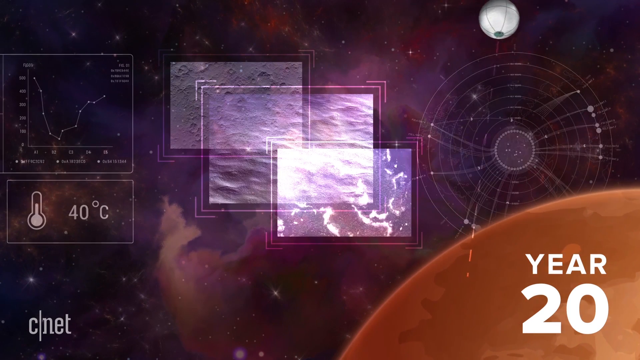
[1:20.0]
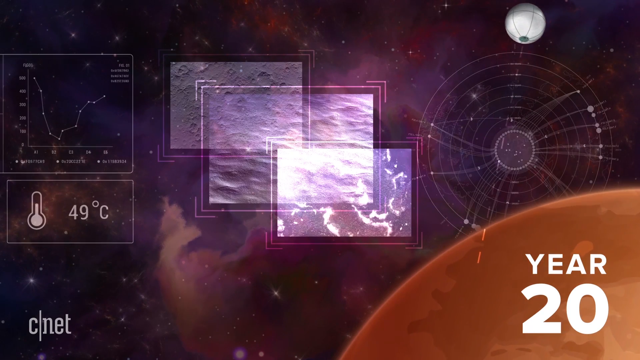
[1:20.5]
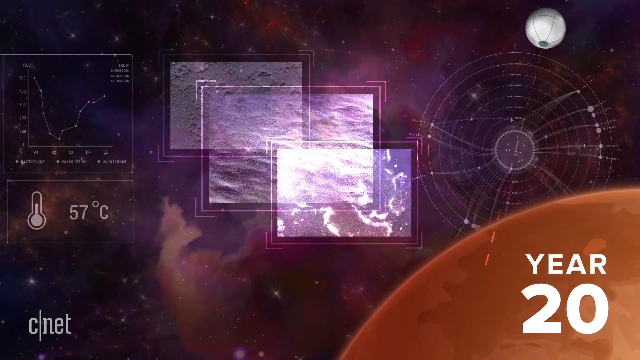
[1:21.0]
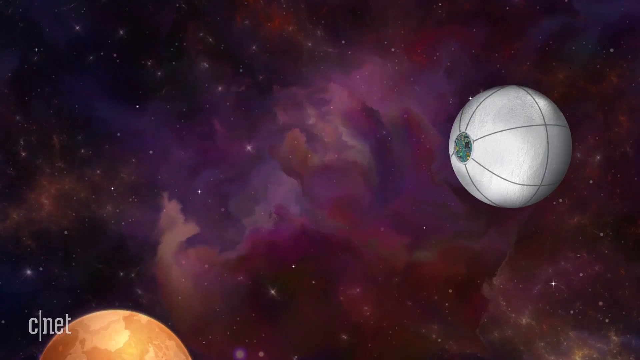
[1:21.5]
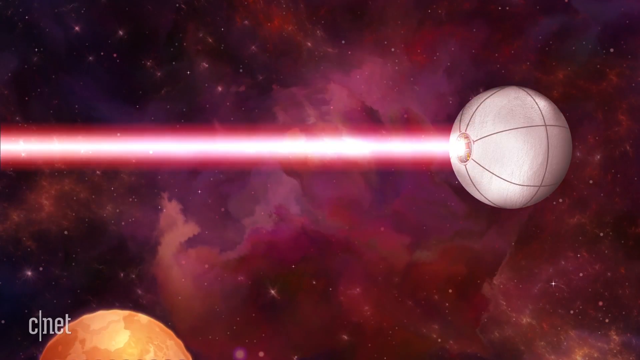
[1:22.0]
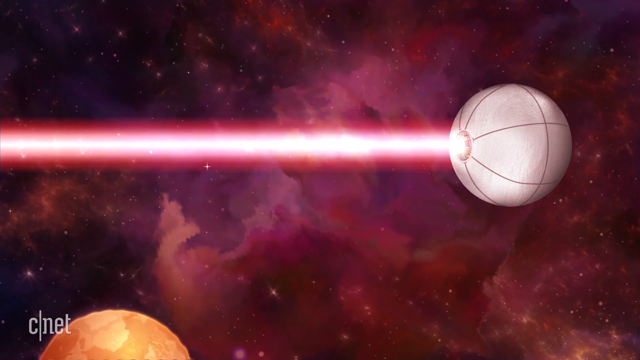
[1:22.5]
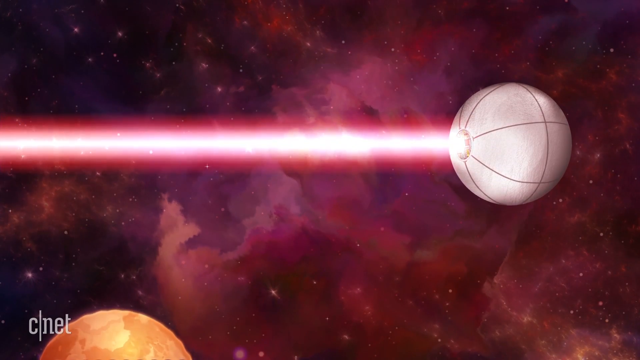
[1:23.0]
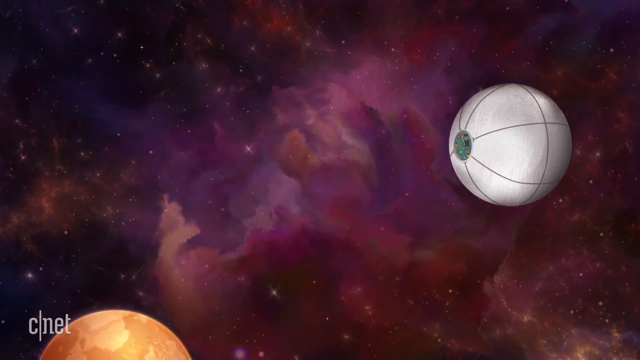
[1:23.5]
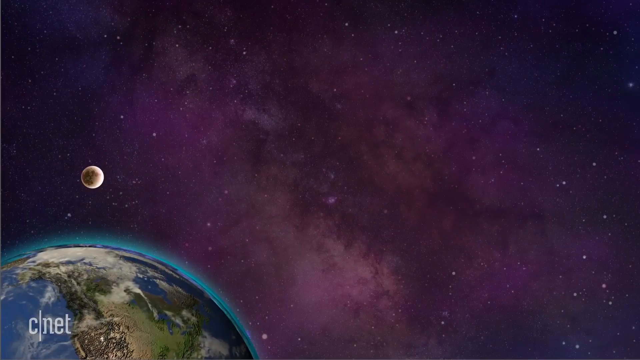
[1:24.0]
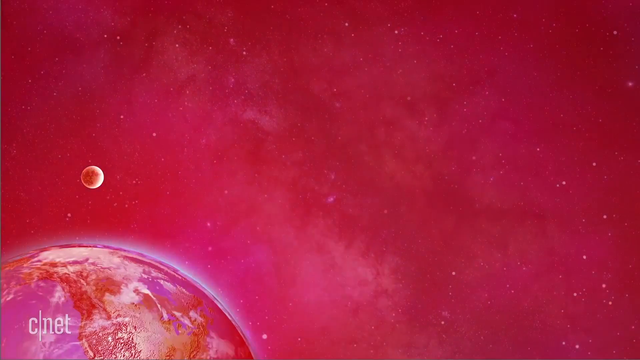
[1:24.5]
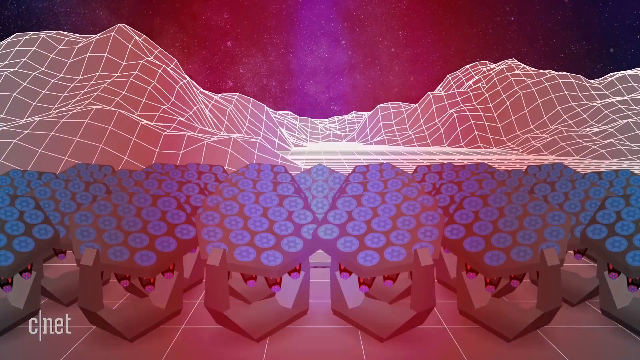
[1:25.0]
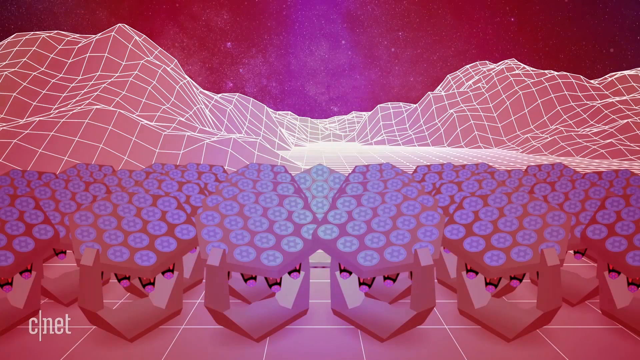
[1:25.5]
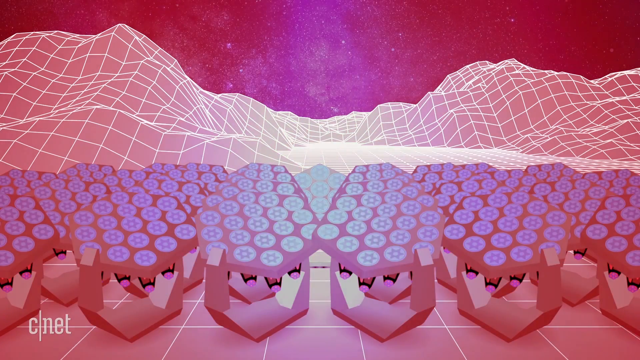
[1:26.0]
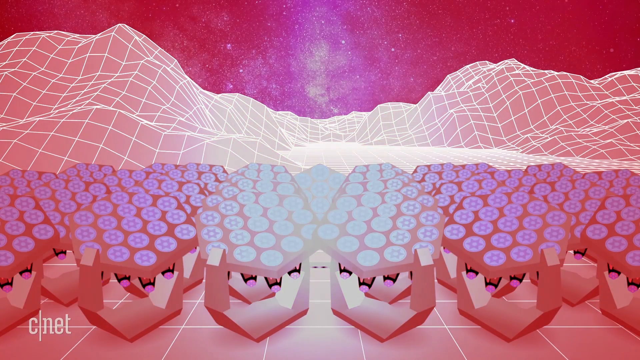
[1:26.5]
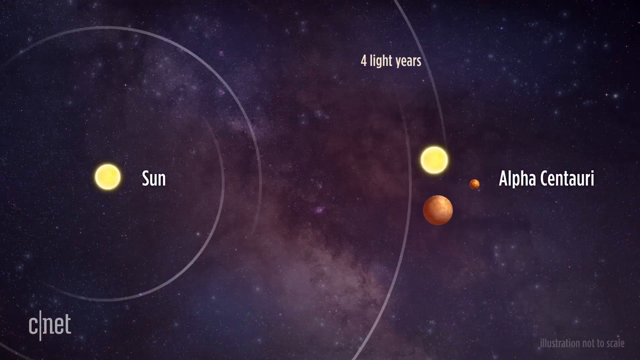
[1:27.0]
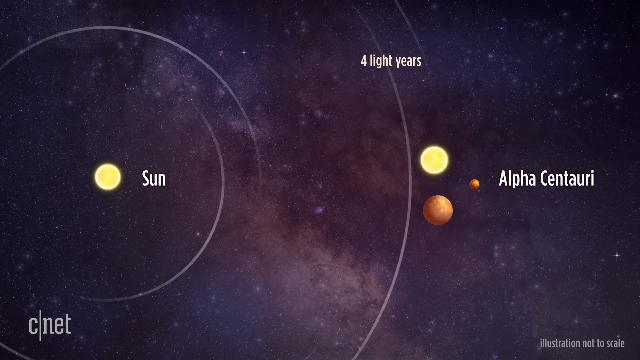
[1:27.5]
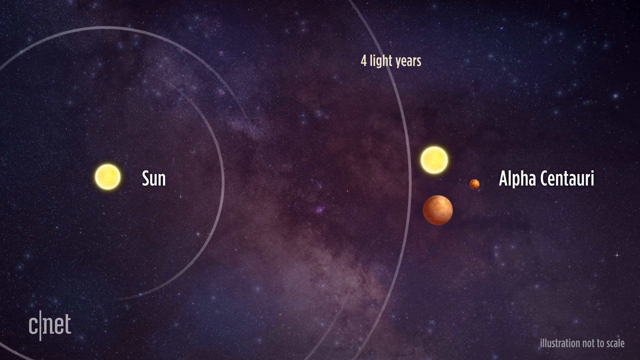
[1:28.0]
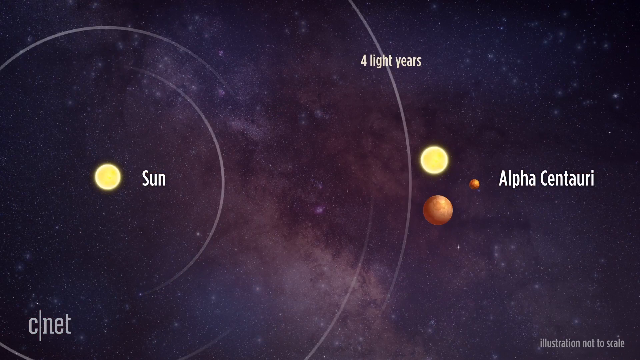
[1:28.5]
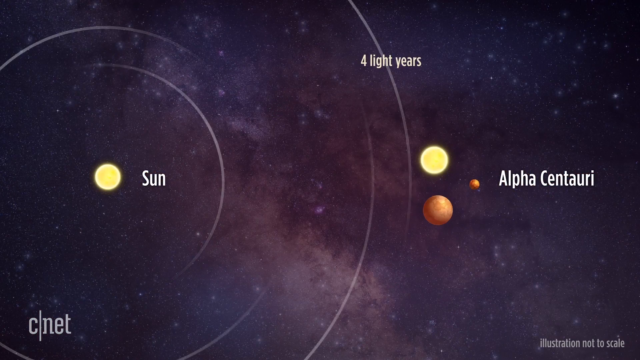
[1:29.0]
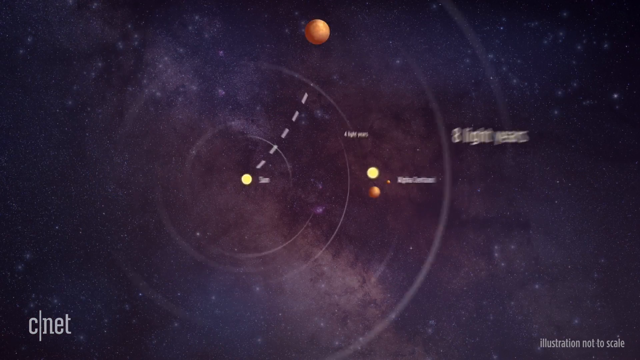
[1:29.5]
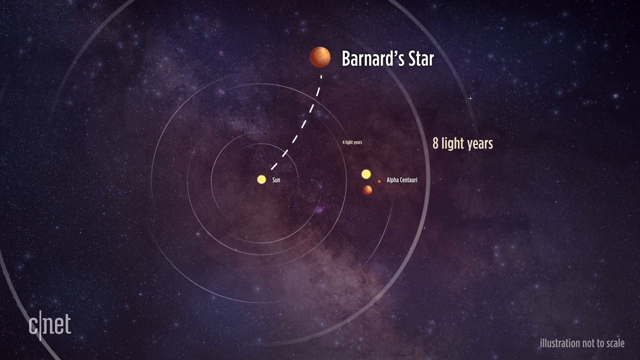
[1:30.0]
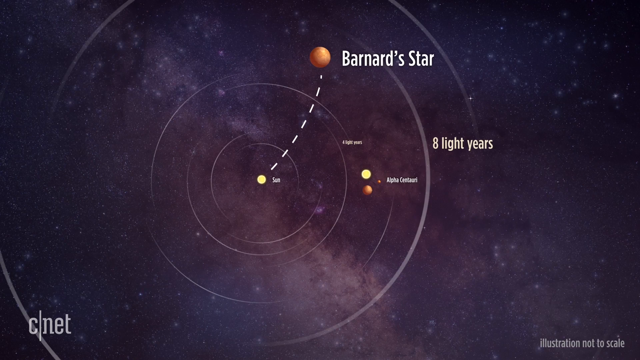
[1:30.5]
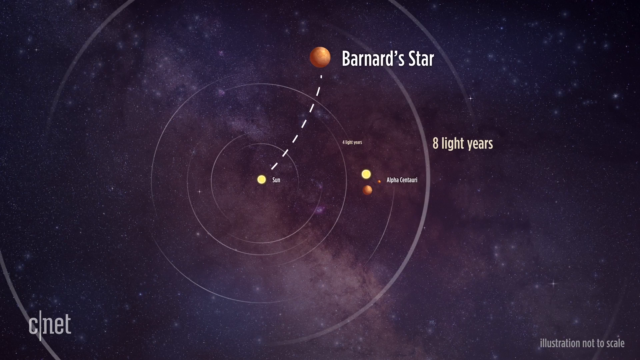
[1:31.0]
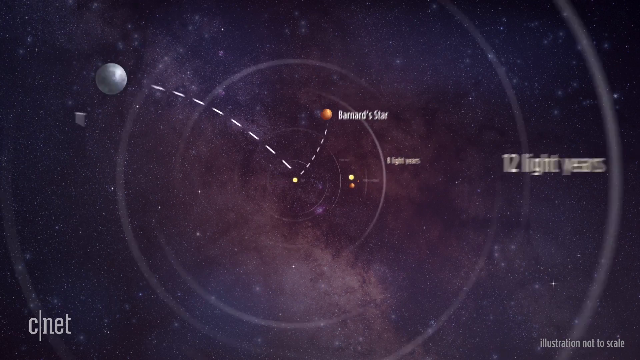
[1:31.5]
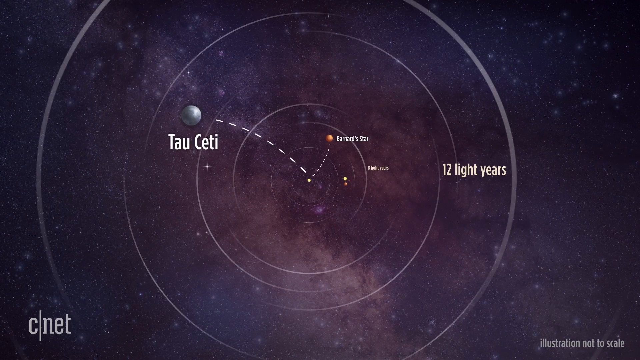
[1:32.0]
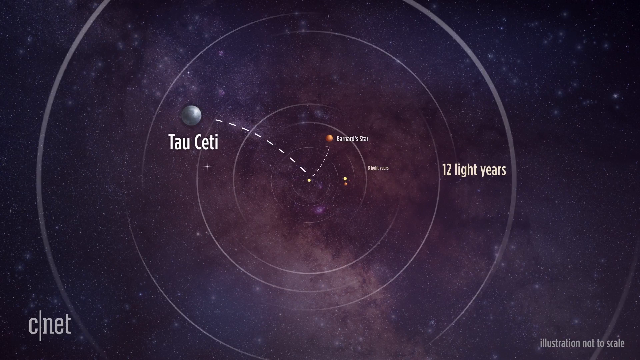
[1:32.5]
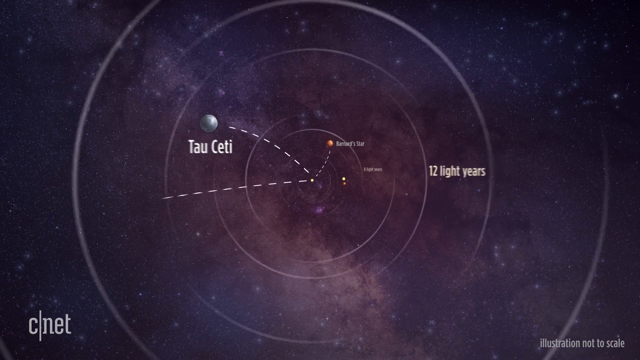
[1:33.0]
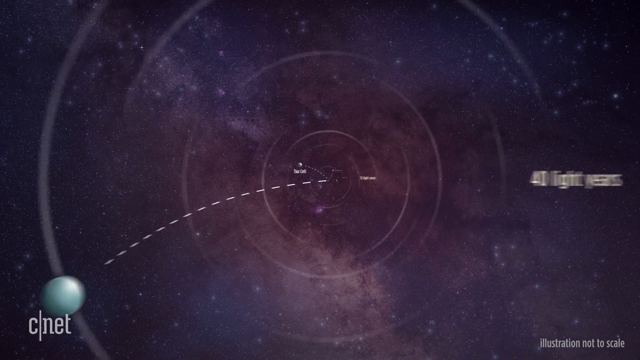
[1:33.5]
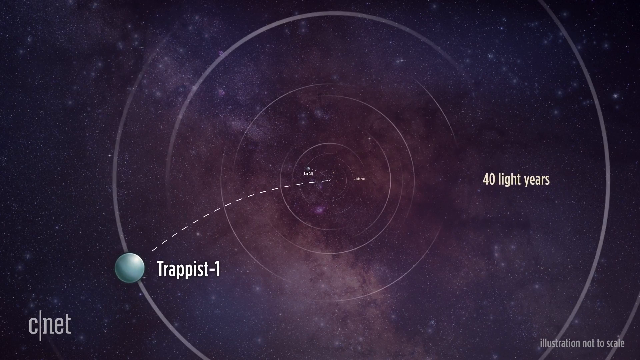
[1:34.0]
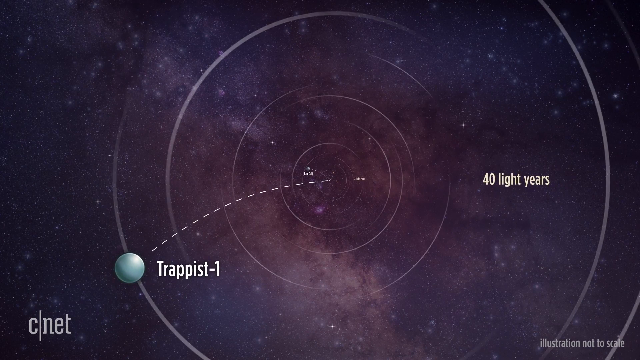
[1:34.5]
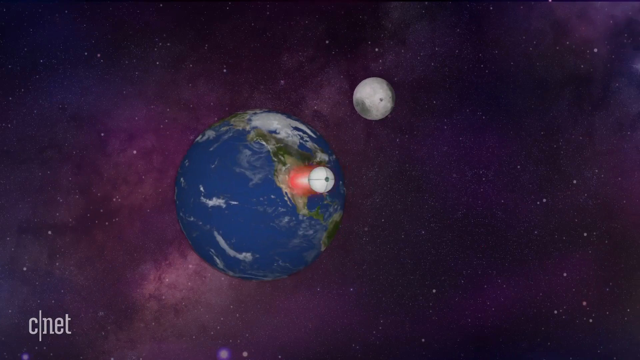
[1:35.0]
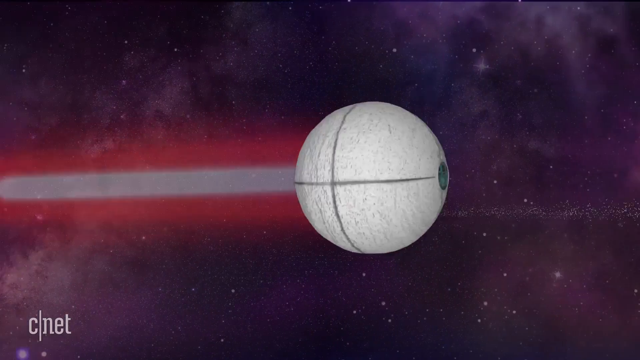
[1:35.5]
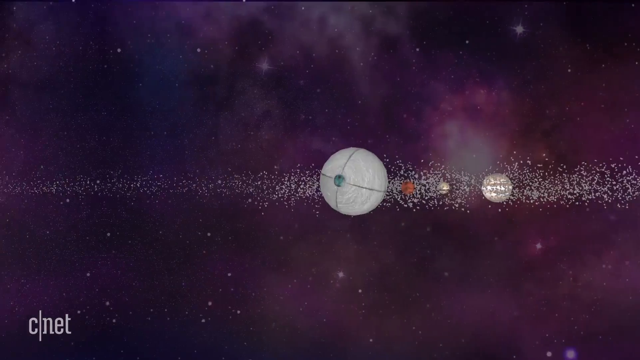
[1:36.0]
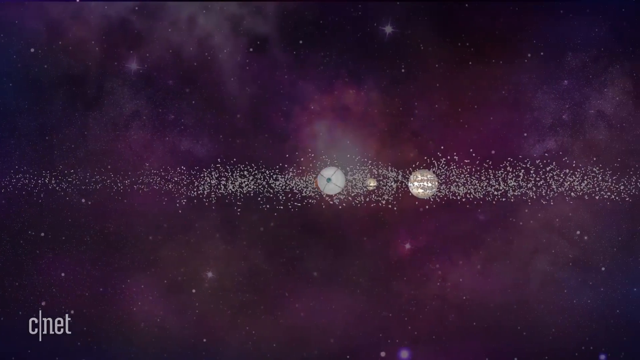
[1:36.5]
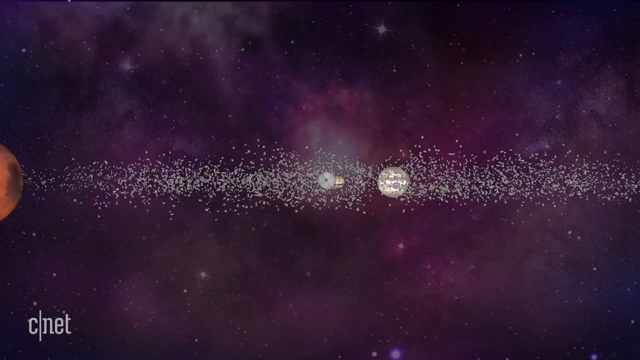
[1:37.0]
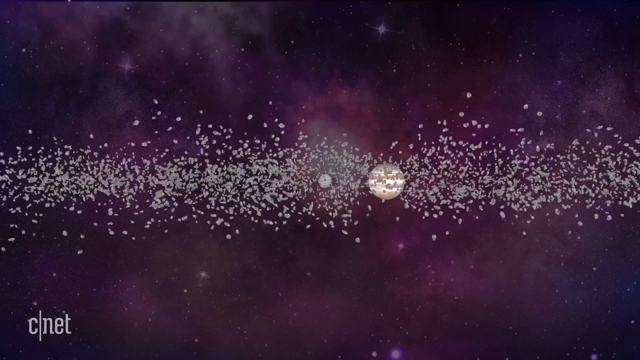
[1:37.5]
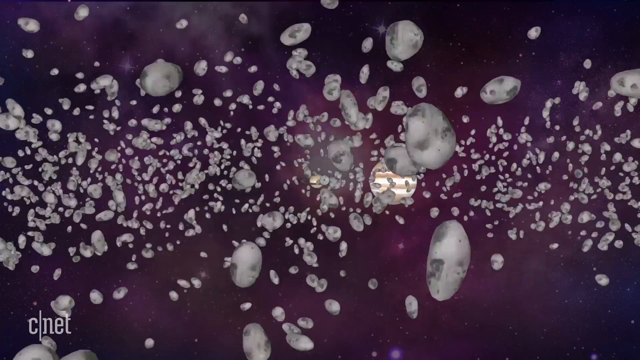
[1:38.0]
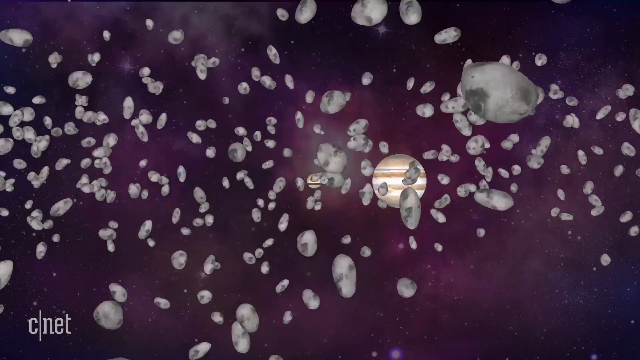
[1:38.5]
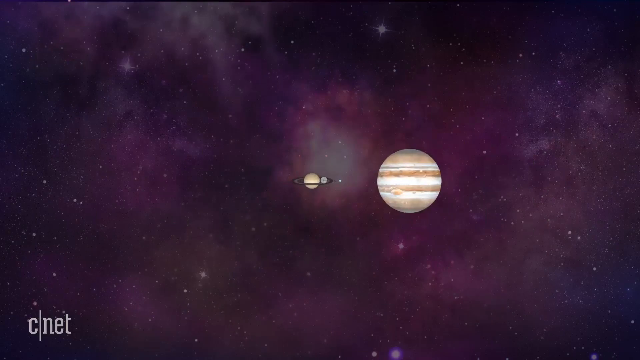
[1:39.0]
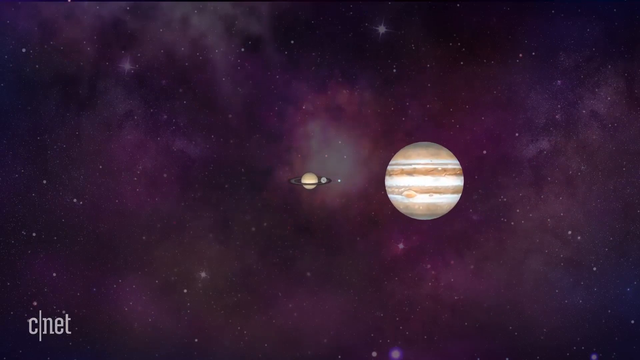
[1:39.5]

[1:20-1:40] The ball continues traveling through space. The view catches up with it after the 20th year, showing the various pictures it has taken and the different degrees Celsius it has gone through; it is apparently able to send these pictures back to Earth quickly. Next, a view of the solar system shows the sun, and it zooms out to Alpha Centauri, Bernard's Star, Tau Ceti, and Trappist-1, with Trappist-1 shown to be over 40 light years away. The ball then continues traveling through asteroids, in an animation similar to the one from its launch.